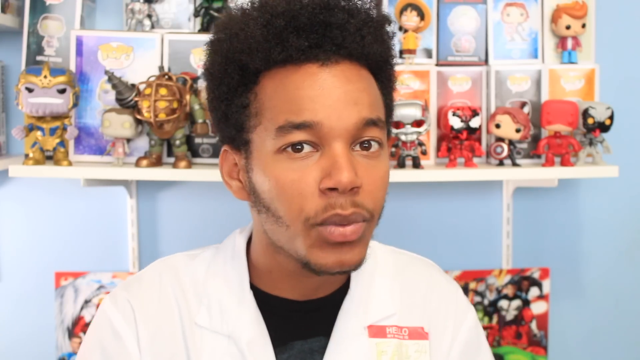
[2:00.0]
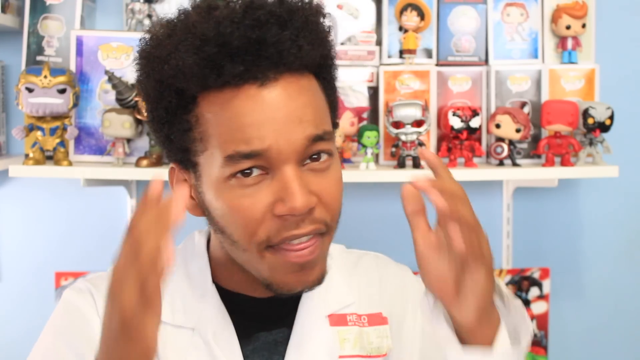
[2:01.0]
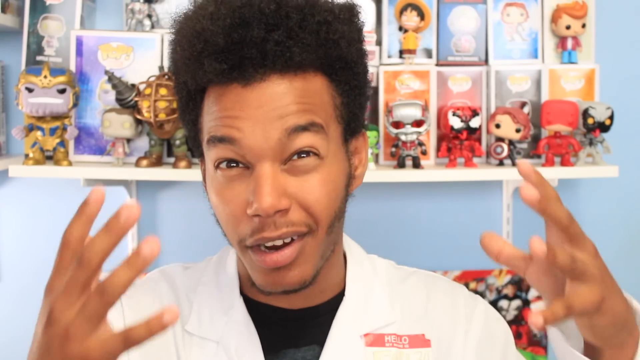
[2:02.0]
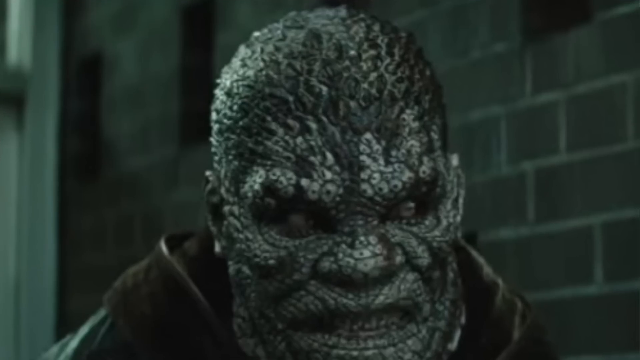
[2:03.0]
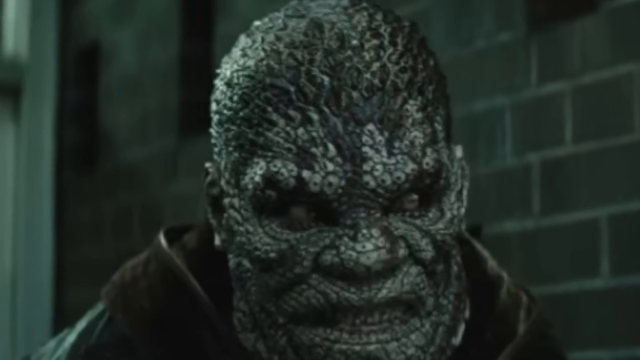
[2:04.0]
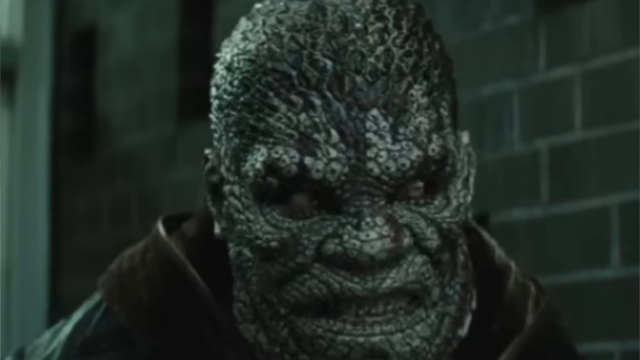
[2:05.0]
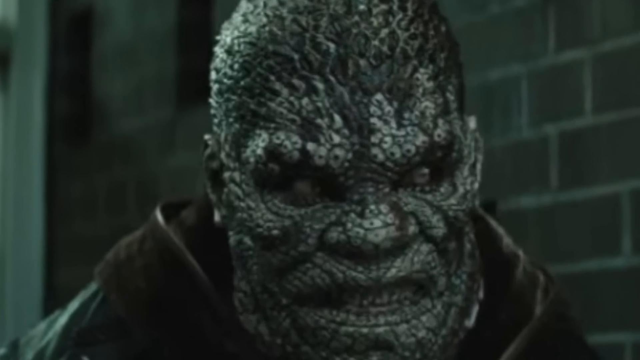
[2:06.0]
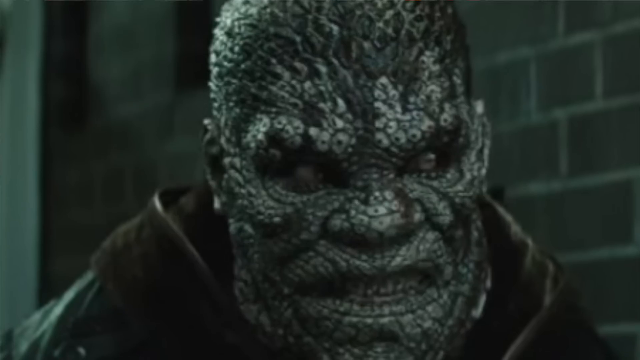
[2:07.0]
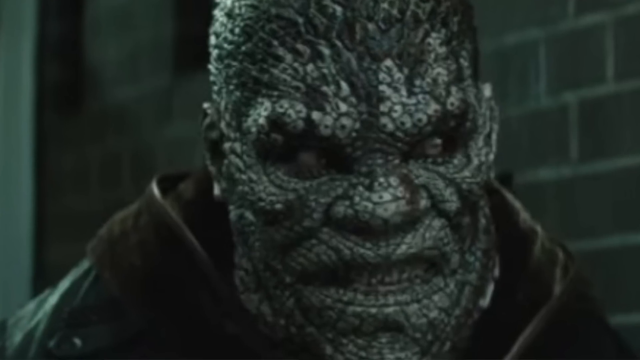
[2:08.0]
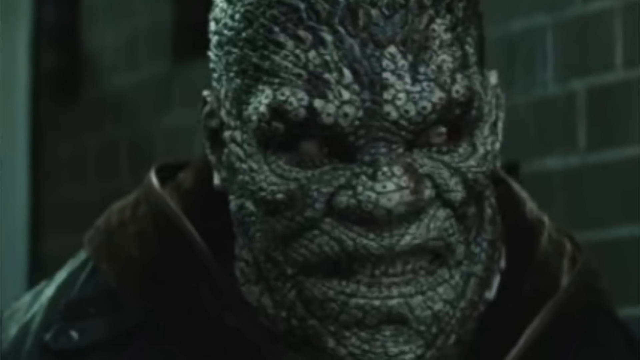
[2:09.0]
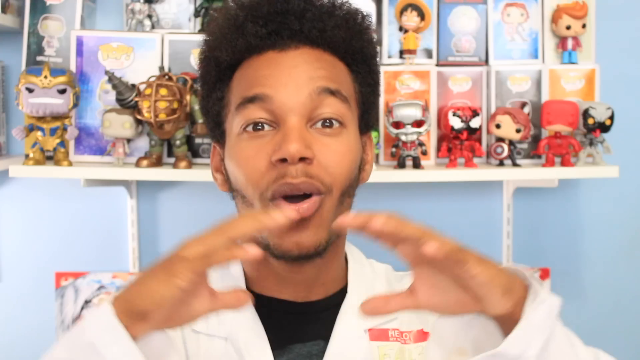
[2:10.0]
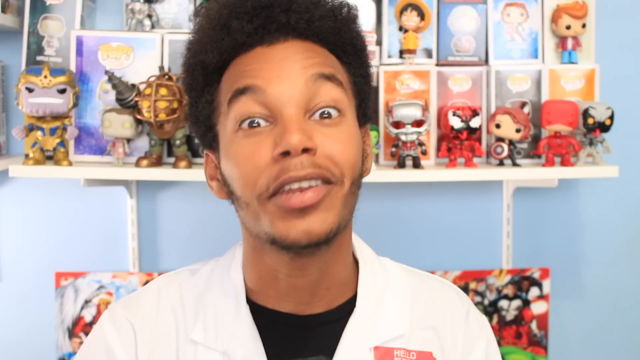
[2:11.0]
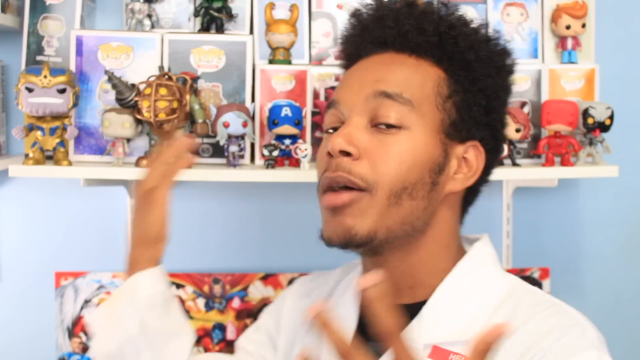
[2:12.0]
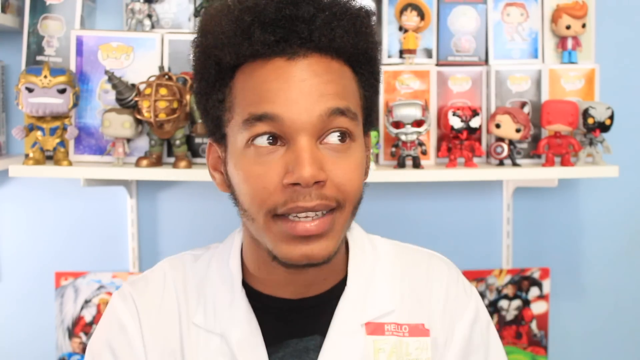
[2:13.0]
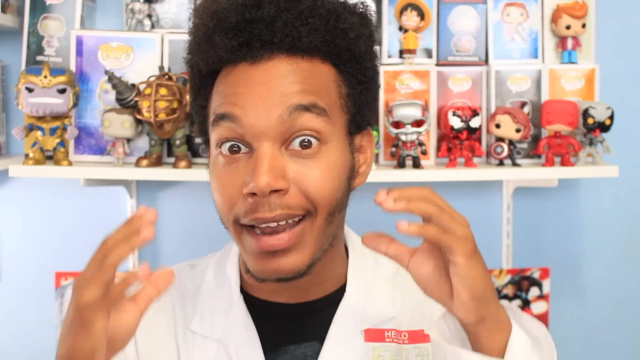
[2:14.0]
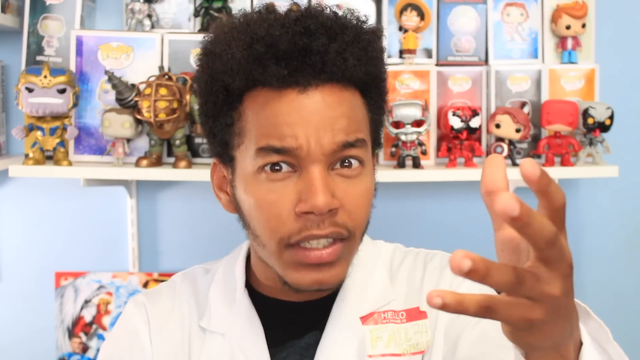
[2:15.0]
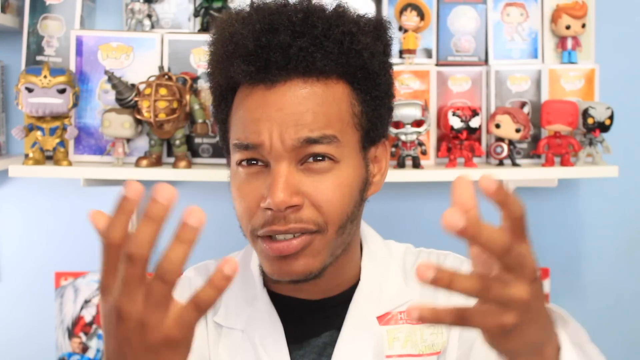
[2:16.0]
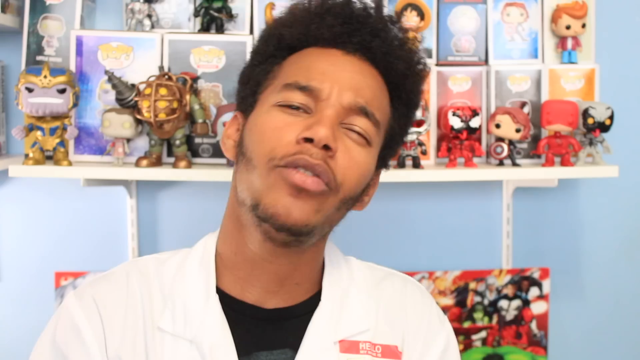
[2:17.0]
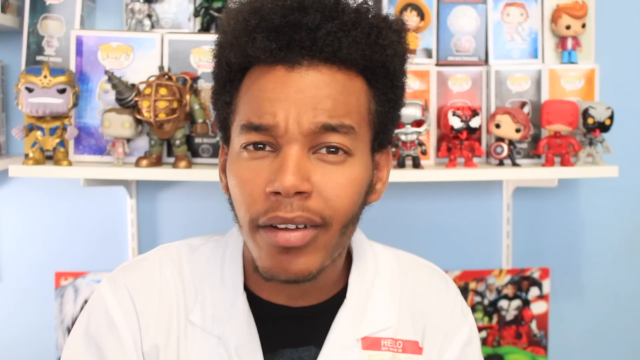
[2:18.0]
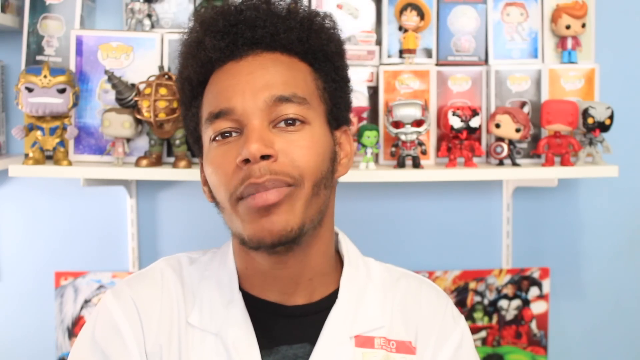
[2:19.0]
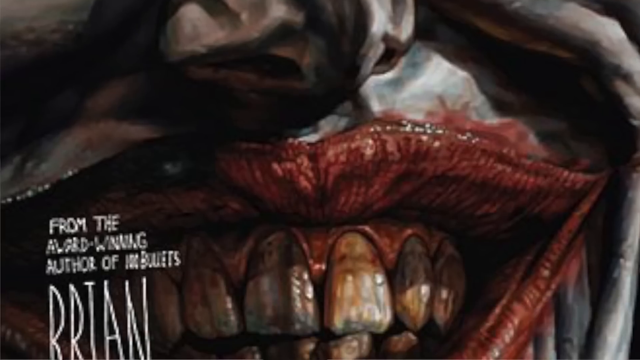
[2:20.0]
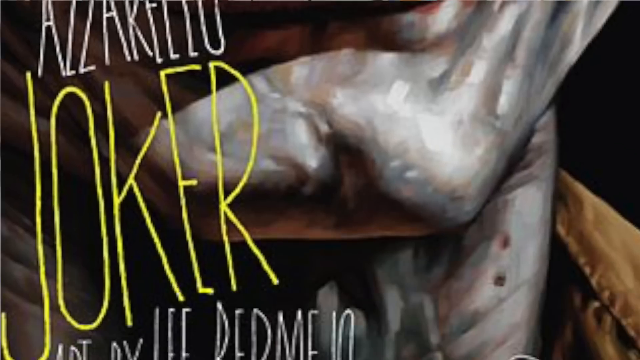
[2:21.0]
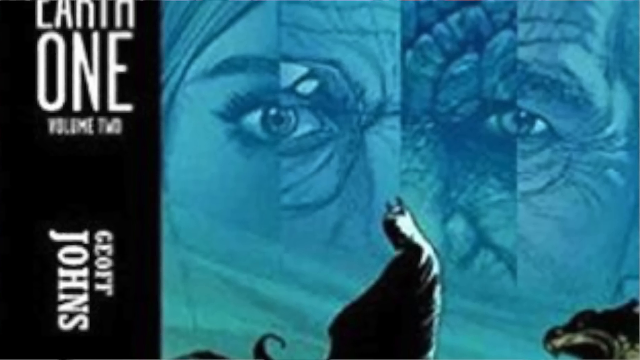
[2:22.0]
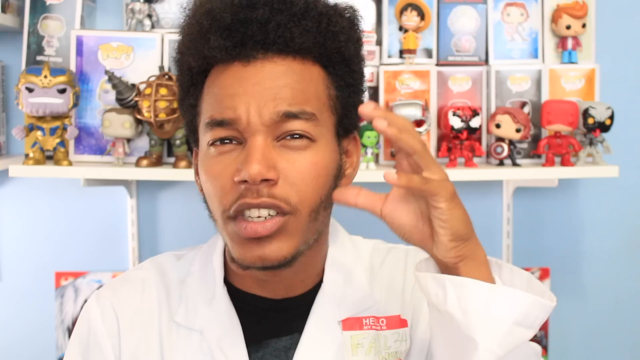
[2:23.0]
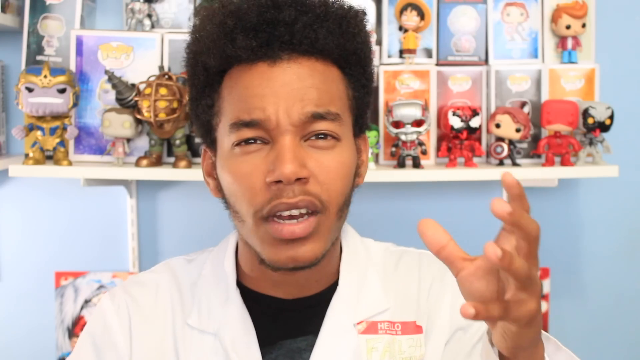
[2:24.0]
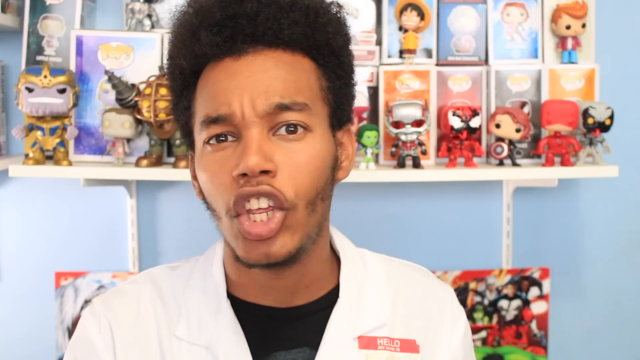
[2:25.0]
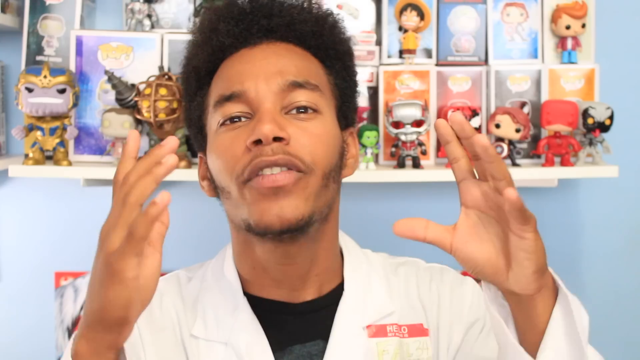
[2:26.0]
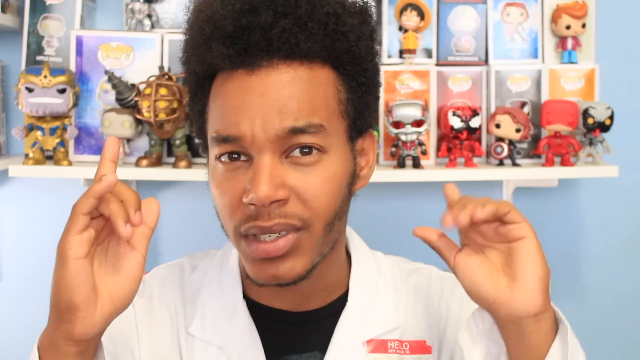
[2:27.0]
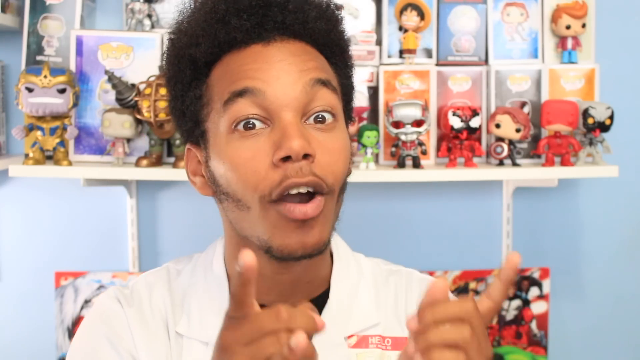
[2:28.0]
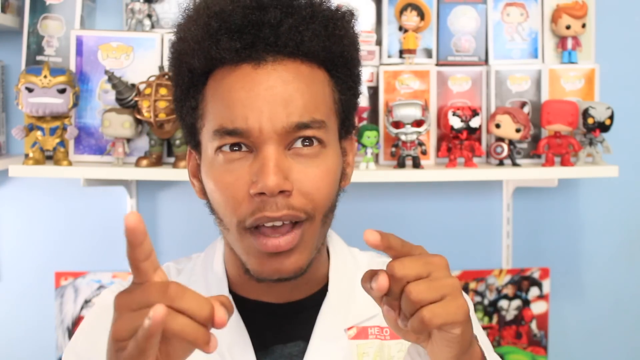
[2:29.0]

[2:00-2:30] A man talks, and a monster that appears scary is shown; the man seems to be explaining something about it. A joker is shown with his mouth open and teeth visible, with red lips that appear to be blood, creating a scary look. A wall built of unpainted bricks is seen. Behind the man in the white jacket, various cartoon character toys are displayed on a shelf against a light blue wall. He keeps talking, moving his hands to express what he is saying. The monster stares right at the camera, creating a tense feel.